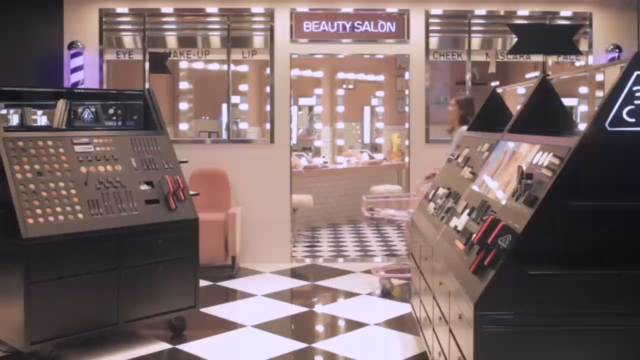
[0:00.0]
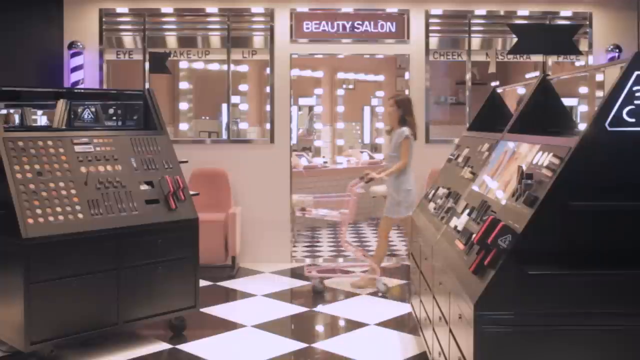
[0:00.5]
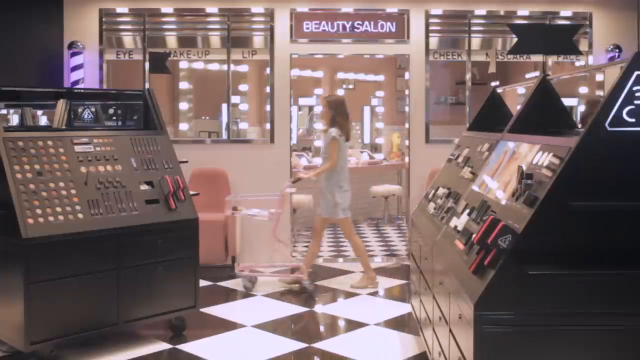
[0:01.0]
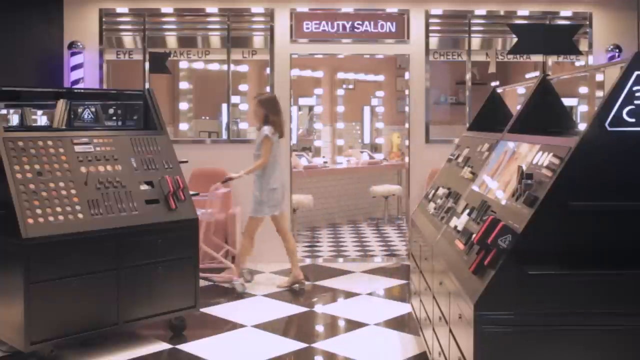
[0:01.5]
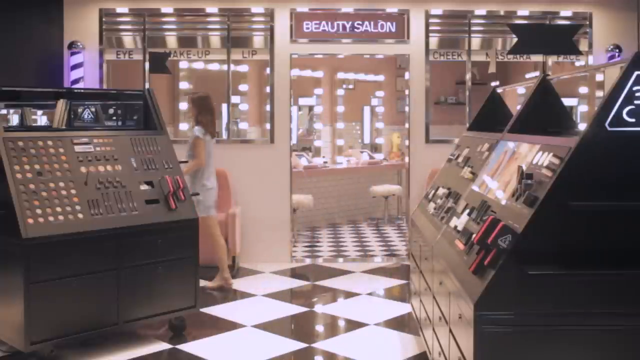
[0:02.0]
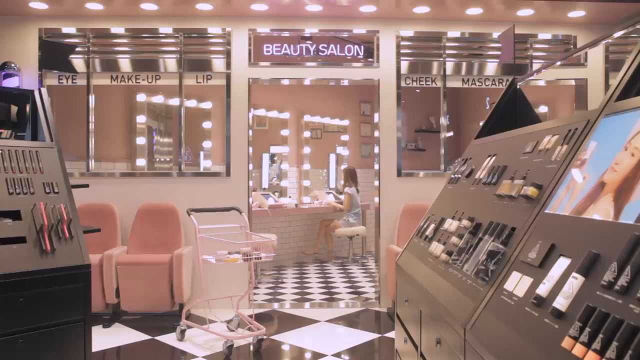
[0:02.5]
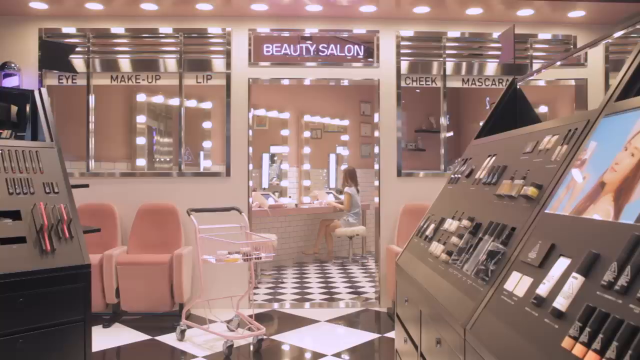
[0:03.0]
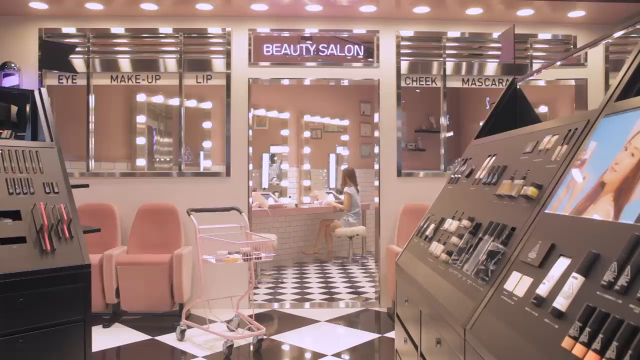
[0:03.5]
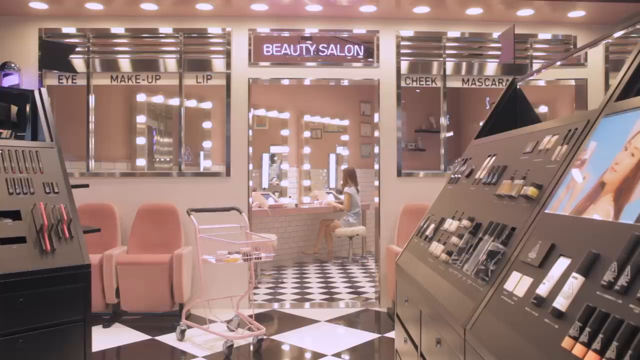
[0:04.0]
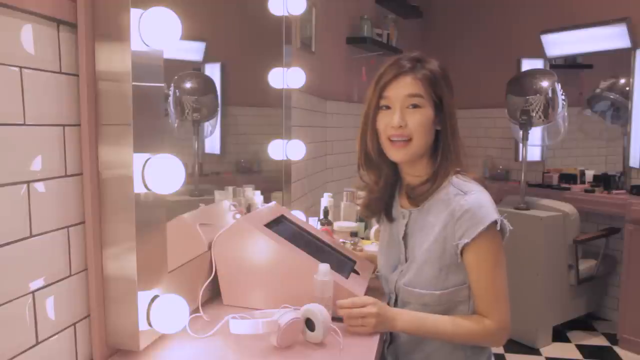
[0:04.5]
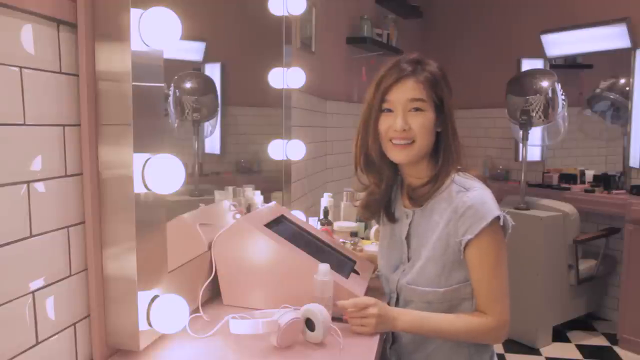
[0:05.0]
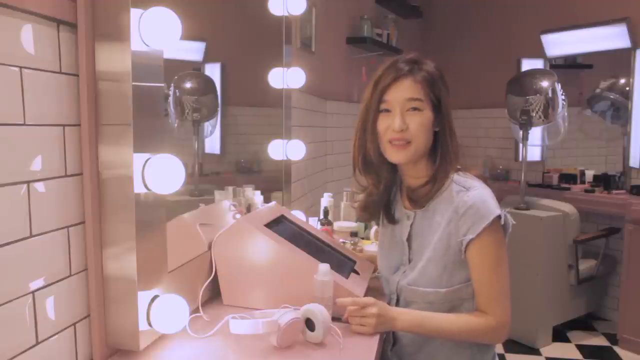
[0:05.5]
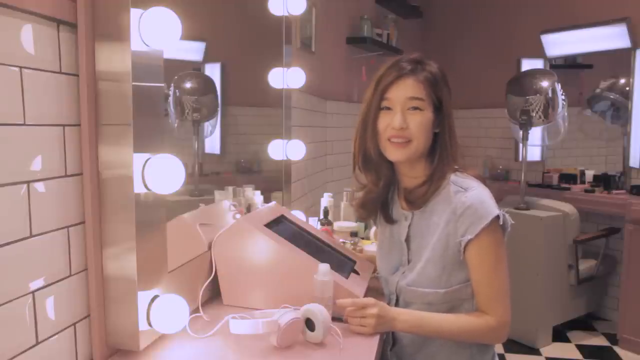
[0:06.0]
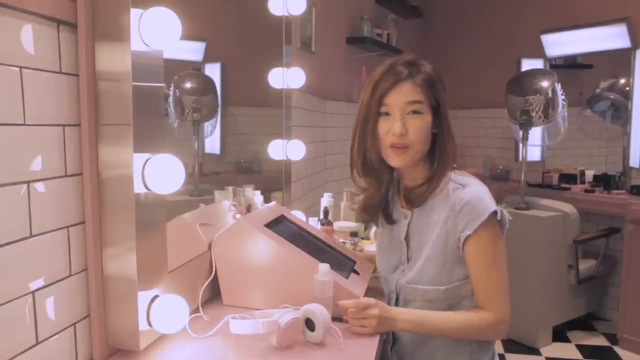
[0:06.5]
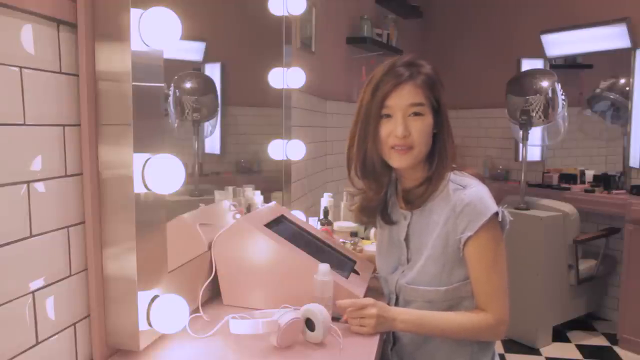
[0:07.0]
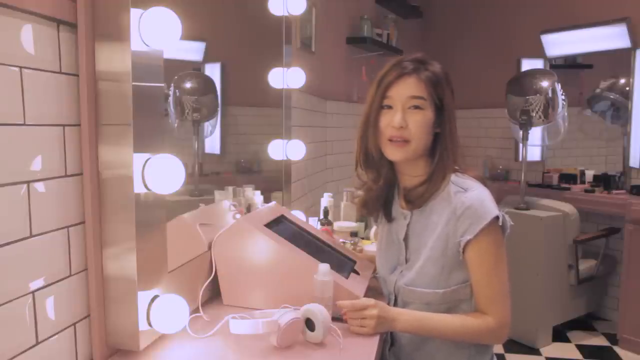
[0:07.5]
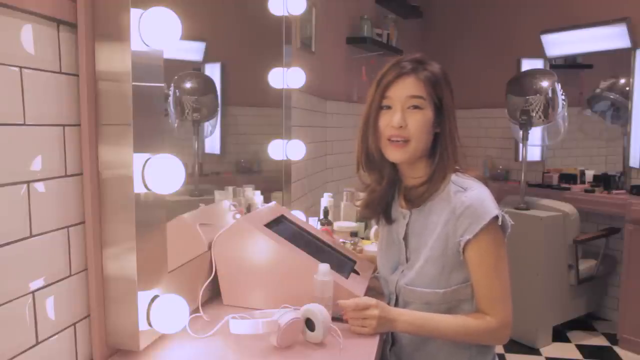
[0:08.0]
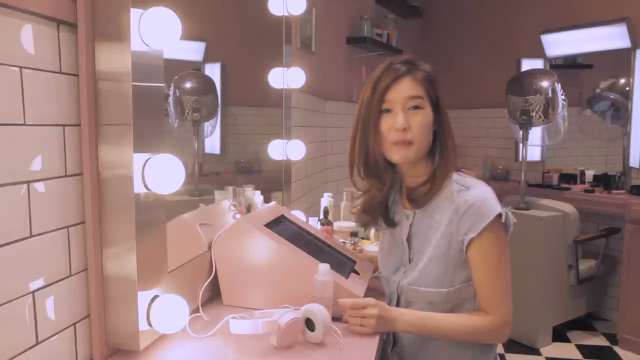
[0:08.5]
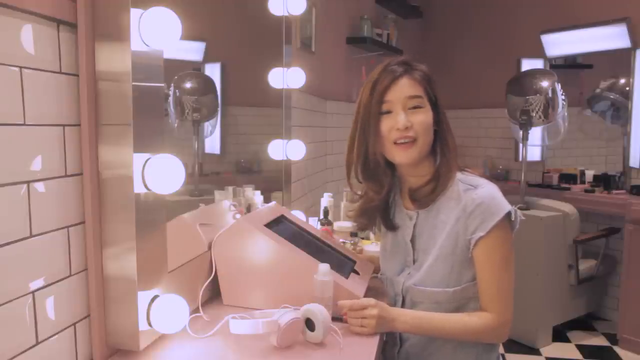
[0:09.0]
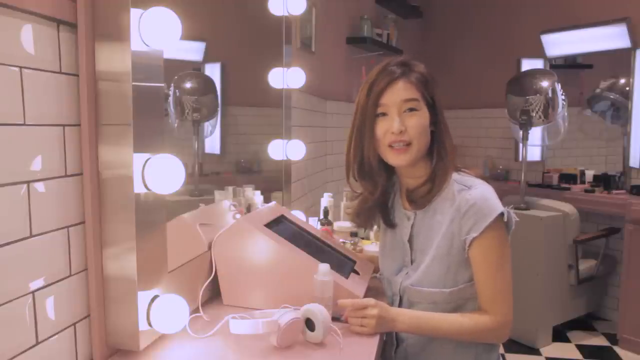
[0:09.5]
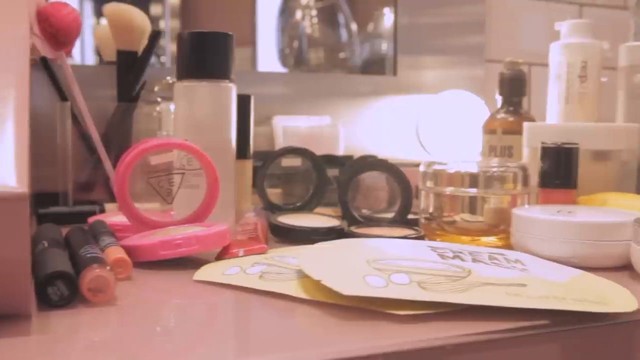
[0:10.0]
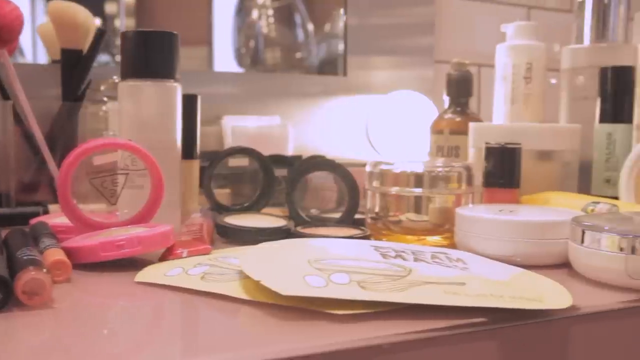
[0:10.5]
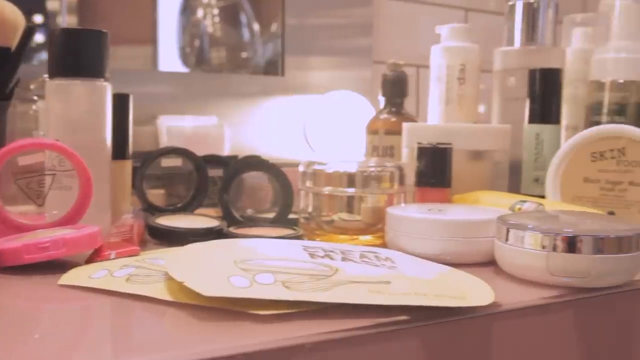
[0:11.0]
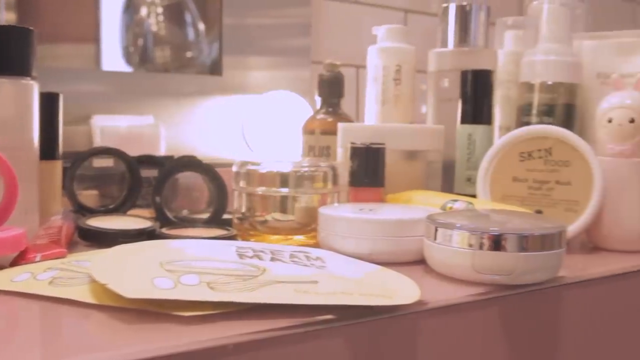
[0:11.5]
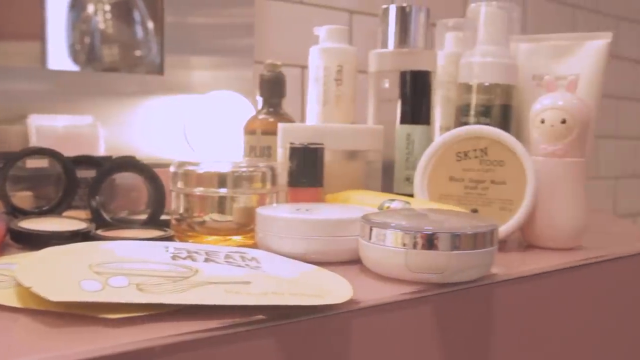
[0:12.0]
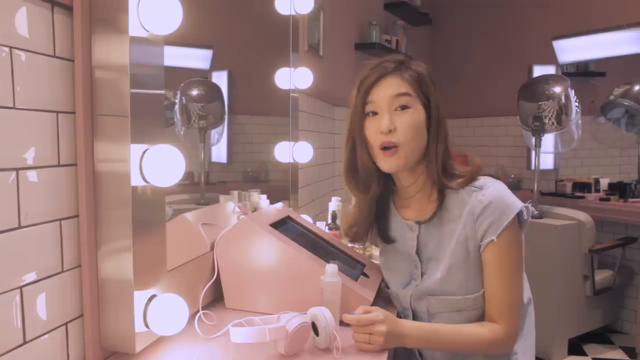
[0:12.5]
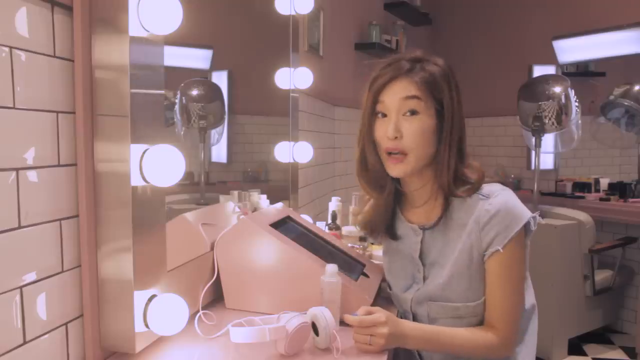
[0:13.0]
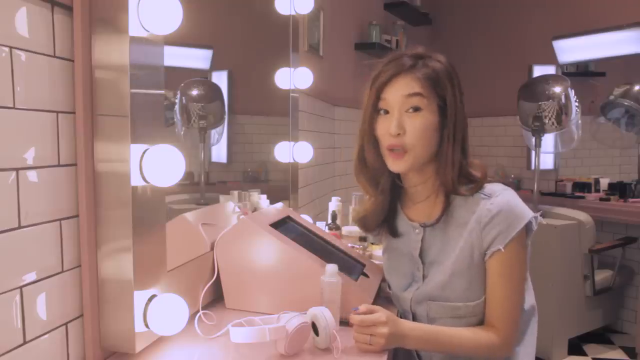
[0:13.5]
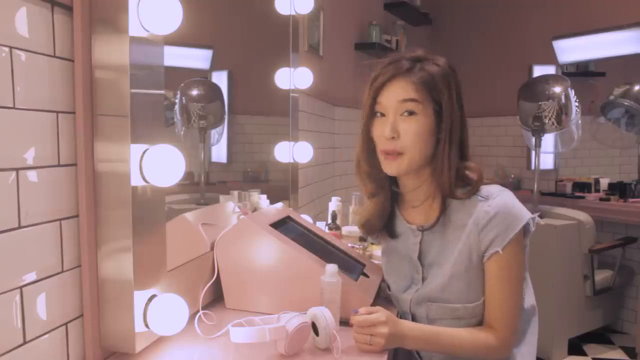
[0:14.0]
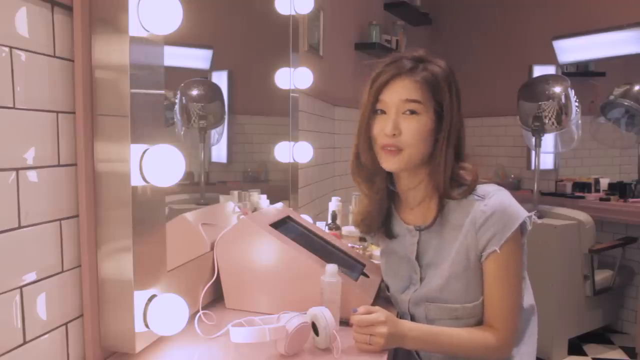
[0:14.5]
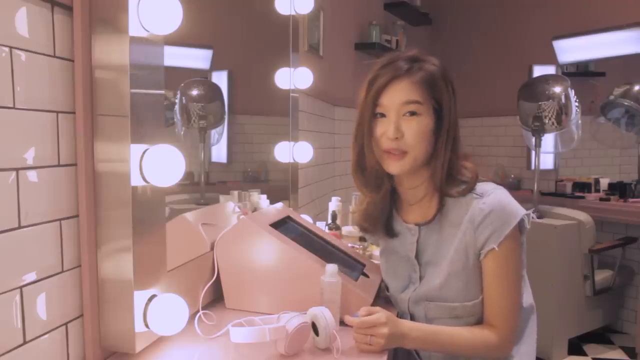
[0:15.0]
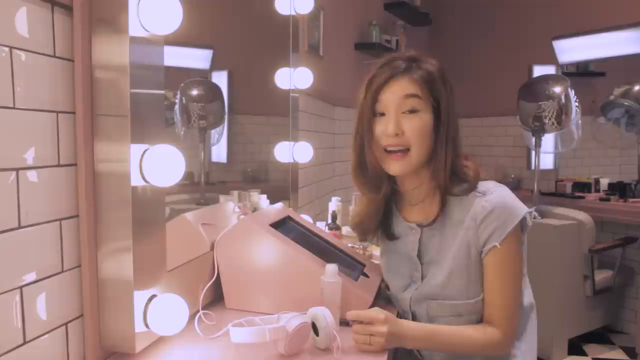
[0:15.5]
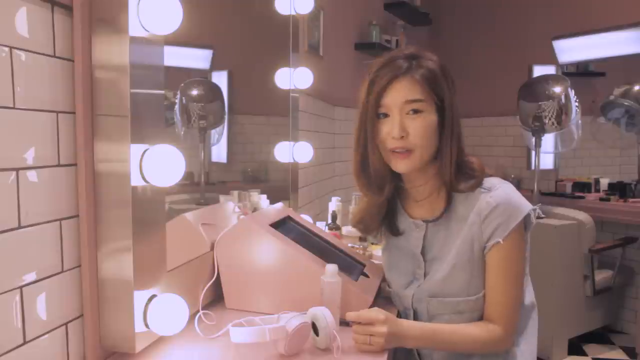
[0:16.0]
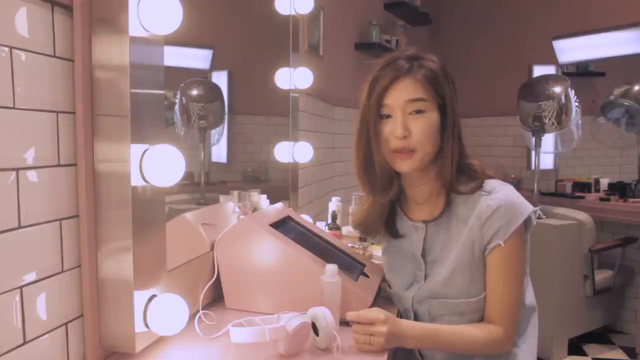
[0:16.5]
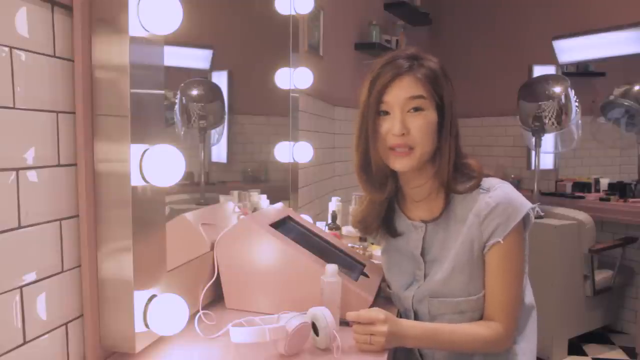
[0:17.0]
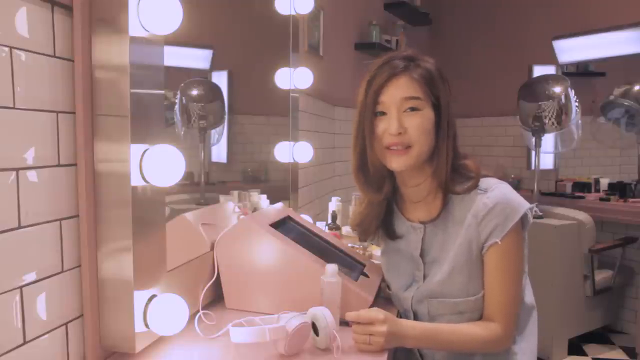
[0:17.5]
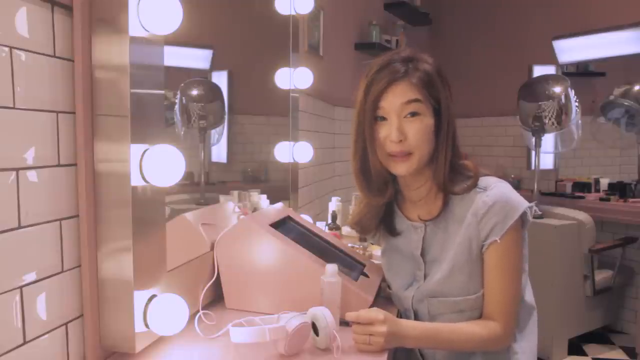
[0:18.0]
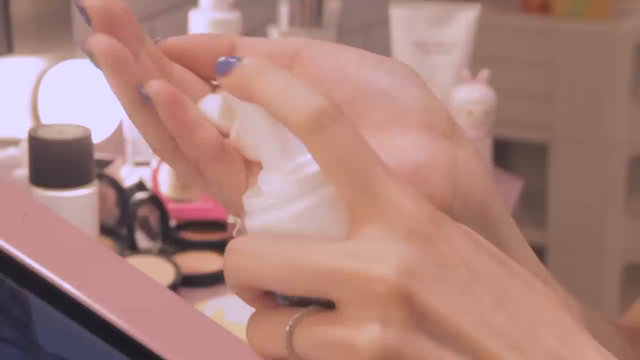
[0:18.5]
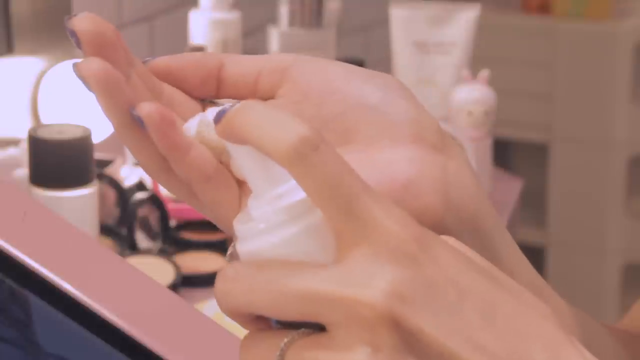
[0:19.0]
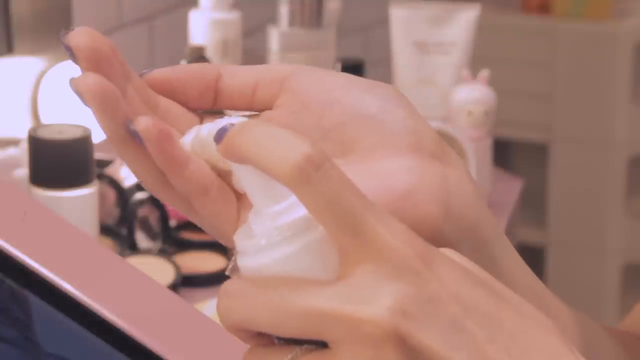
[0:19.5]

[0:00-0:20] A Chinese woman pushes a pink trolley across a black and white floor, with other machines on the side. She then enters a beauty salon, sits down and shows the product she is selling. The salon has beautiful lighting and dusty pink walls. Outside the salon there are two pink couches, and inside there is a gray couch along with other products and headphones. The machines are black and have screens showing a smiling woman. The salon also sells makeup, including eye shadows, eyeliner, lip gloss, mascara, lashes and many other beauty items. The woman wears a grey dress and has long brown hair and purple nails.